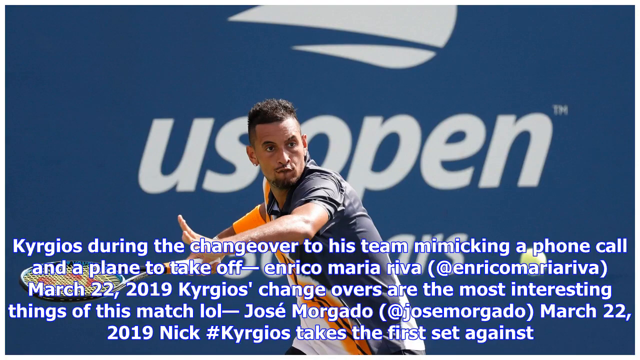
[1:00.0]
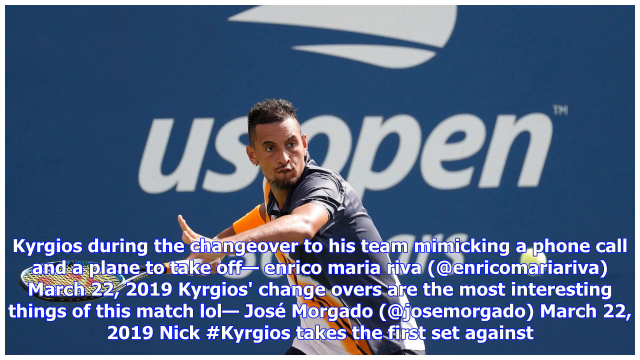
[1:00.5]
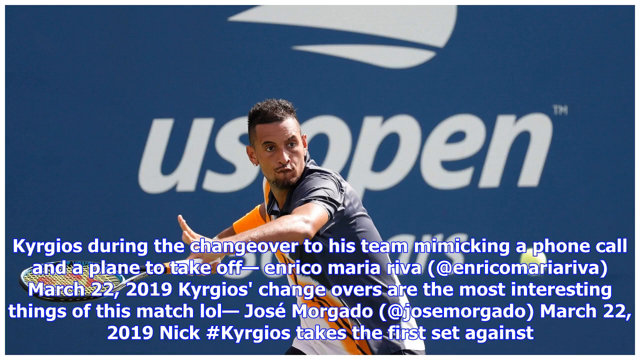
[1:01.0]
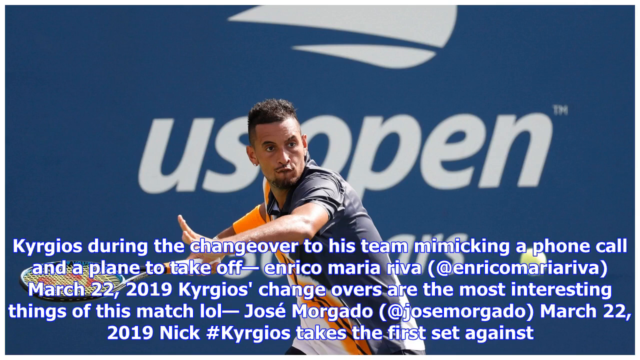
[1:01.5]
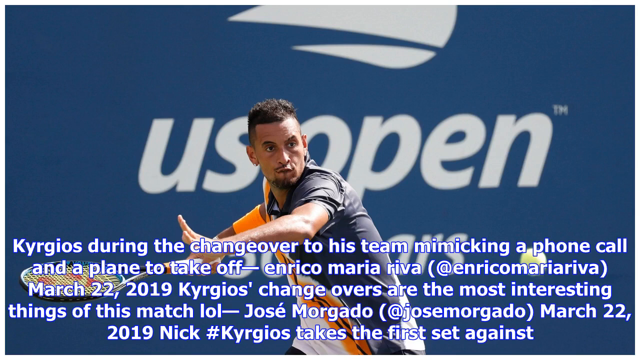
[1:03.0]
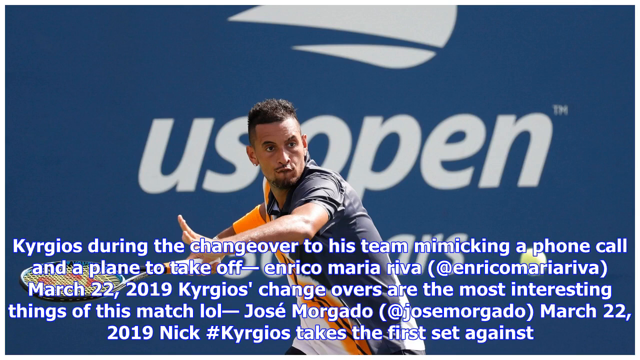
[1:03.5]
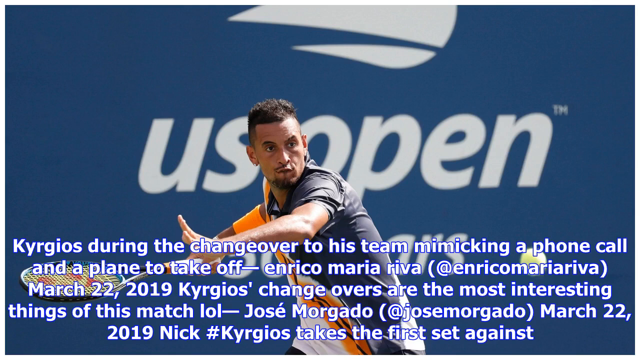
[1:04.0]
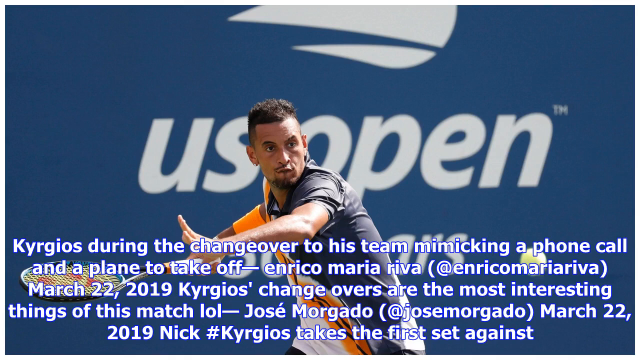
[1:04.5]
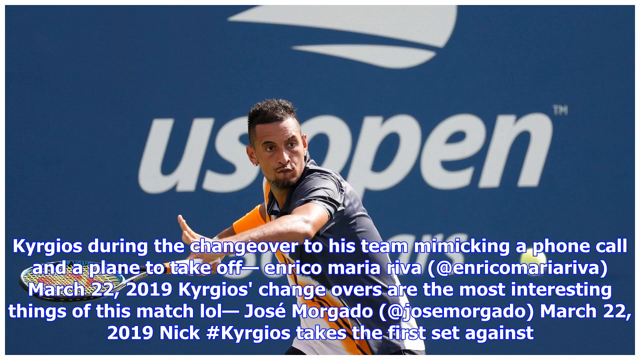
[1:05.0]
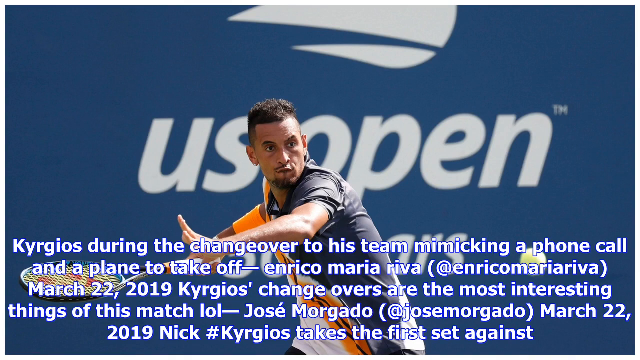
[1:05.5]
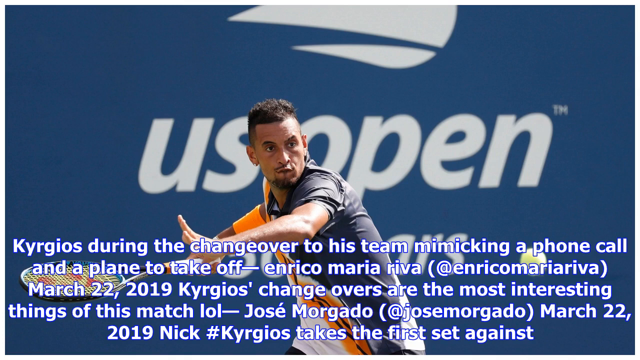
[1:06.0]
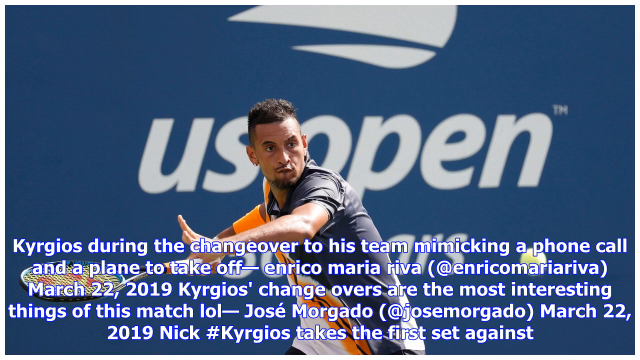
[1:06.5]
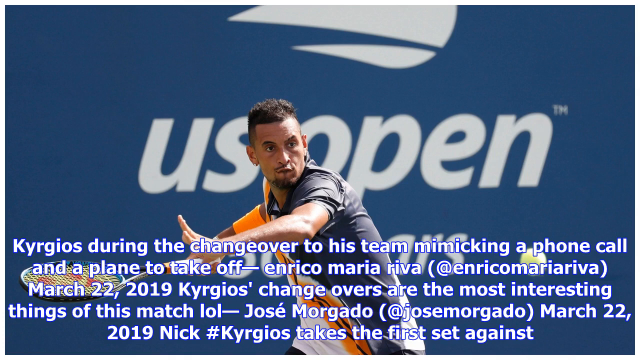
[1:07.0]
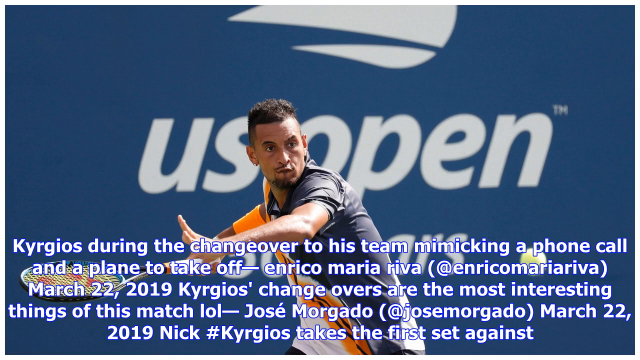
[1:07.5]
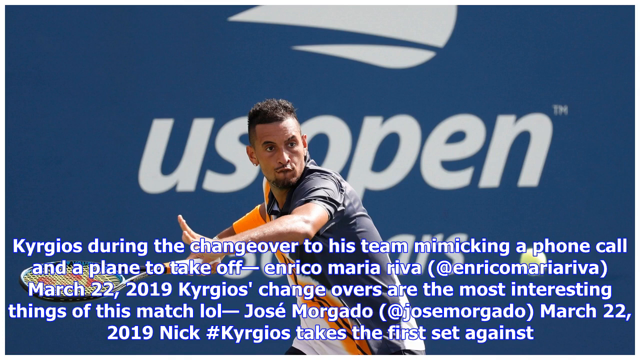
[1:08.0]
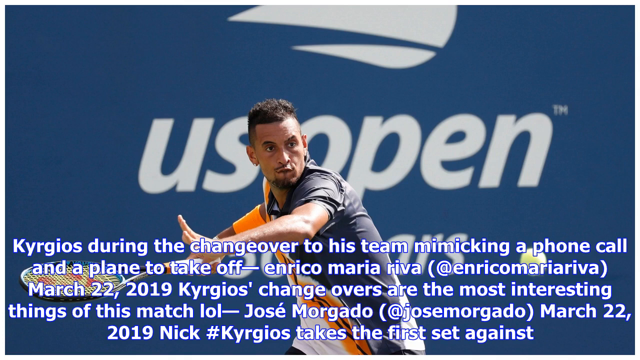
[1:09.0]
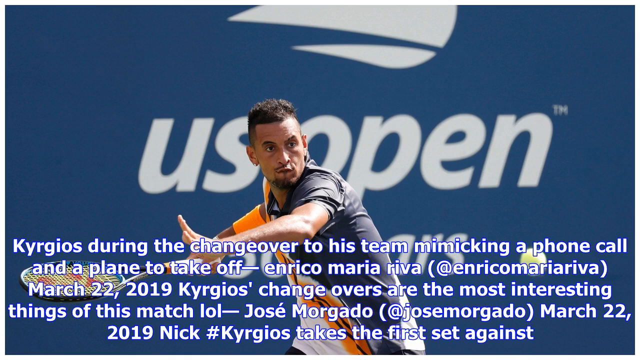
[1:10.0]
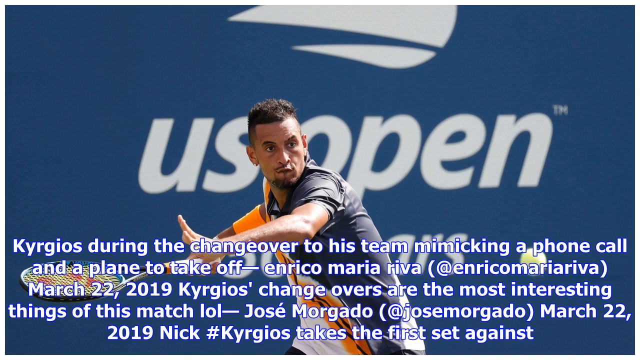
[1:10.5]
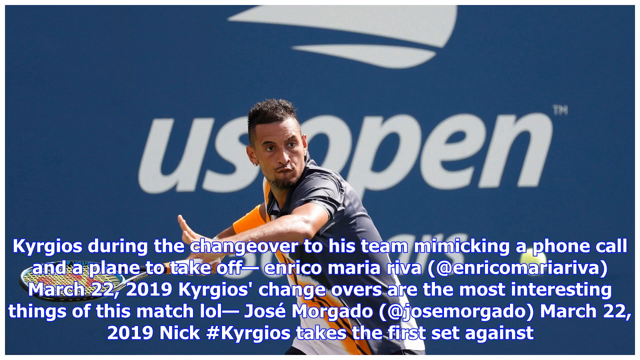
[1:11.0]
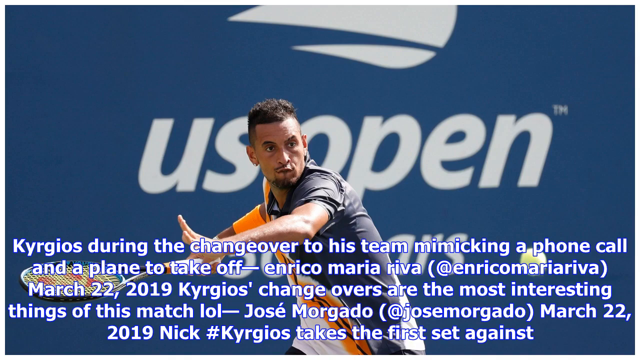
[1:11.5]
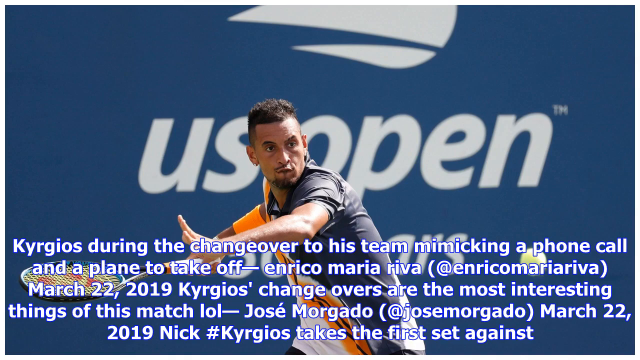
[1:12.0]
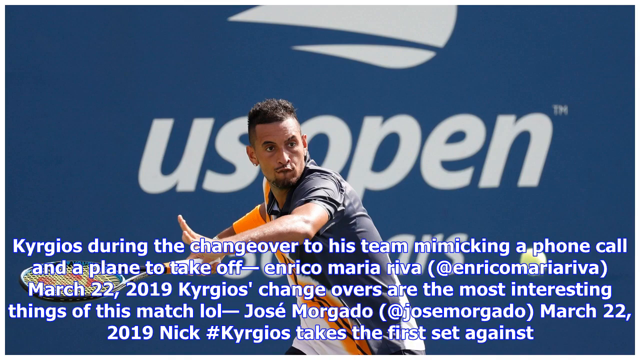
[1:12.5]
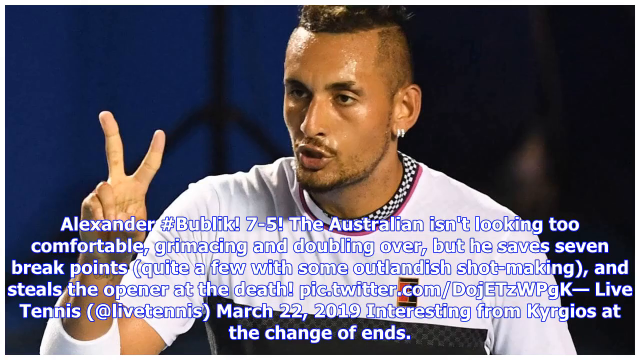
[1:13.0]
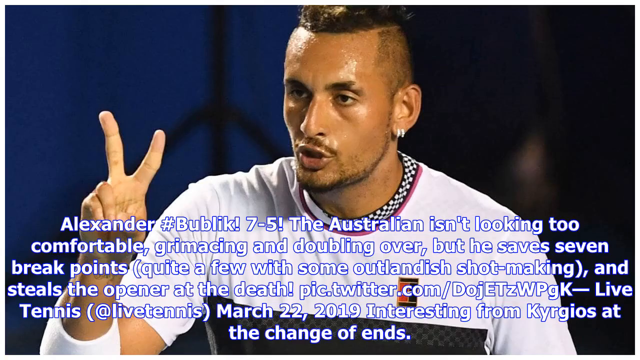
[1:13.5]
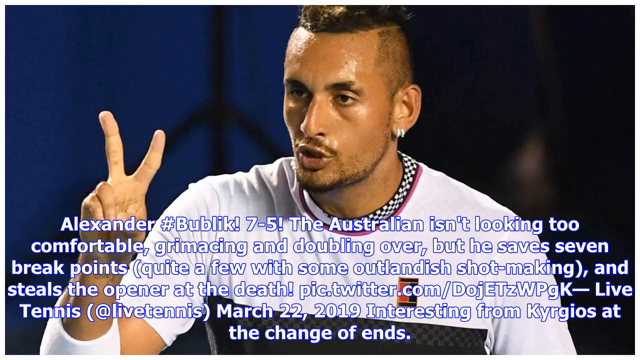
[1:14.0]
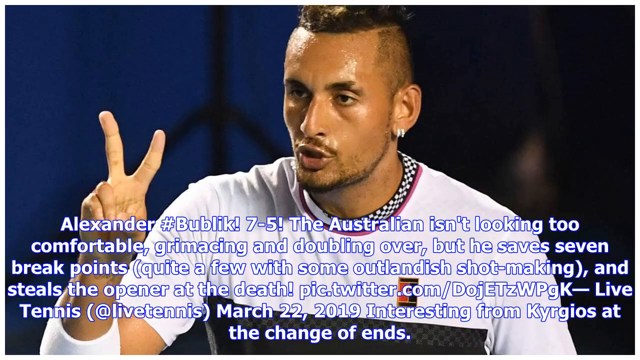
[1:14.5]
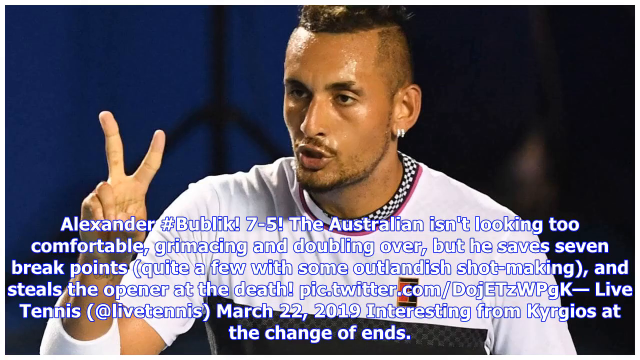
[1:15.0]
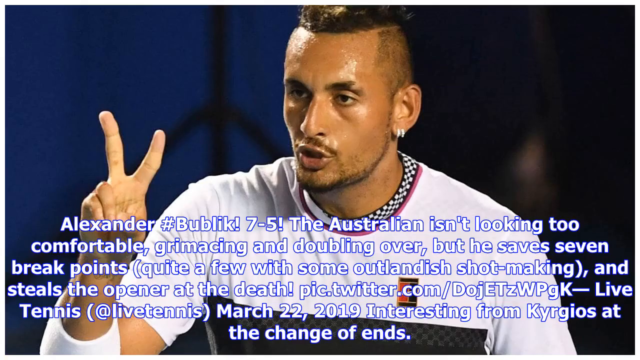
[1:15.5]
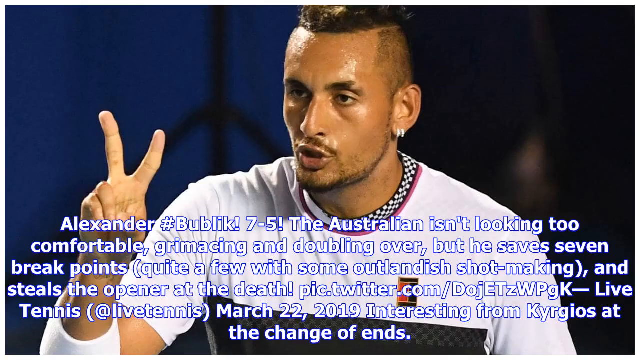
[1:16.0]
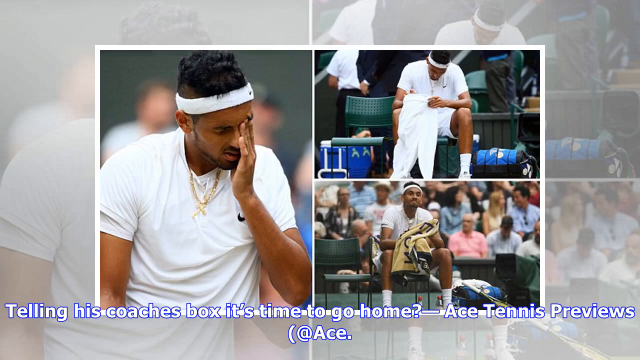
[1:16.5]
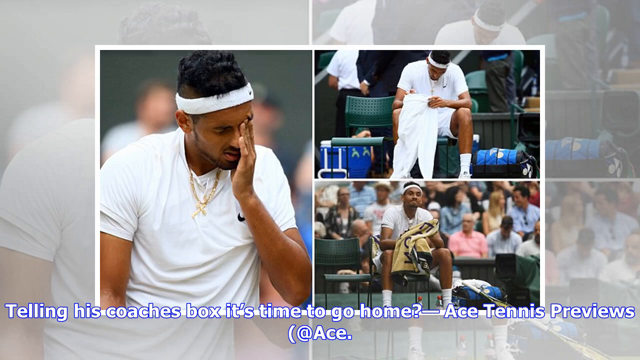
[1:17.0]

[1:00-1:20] A photo shows Kyrgios about to strike the ball in a blue, white and orange shirt, looking focused. Then the earlier picture of him making the peace or two sign with his fingers appears, followed by the picture of him sitting down during a break. Three different pictures of him, apparently from the same break, show him in a chair with a towel, looking disappointed and frustrated. The pictures flash through quickly, each lasting about 5 seconds instead of about 10 as before. Text reads "telling his coaches box it's time to go home."